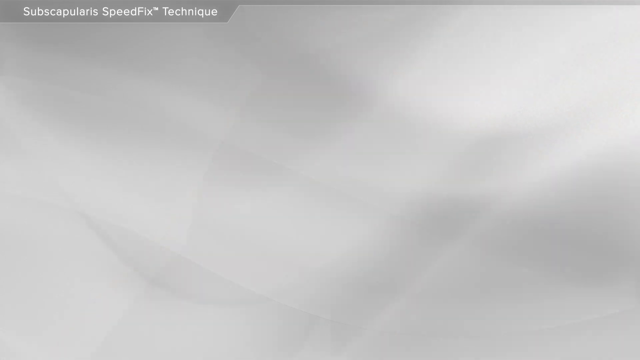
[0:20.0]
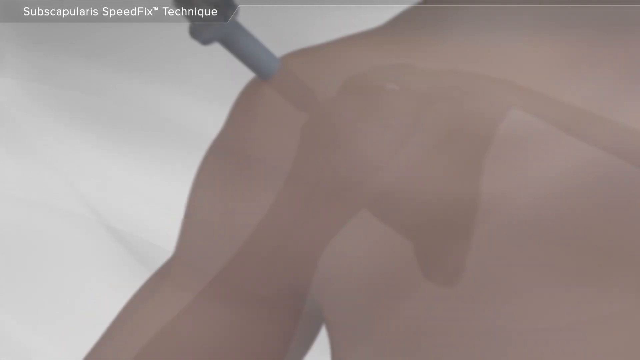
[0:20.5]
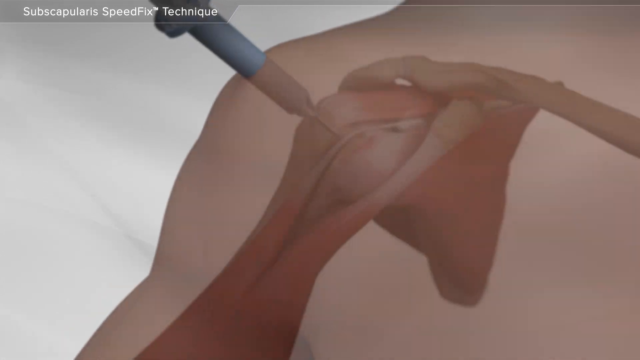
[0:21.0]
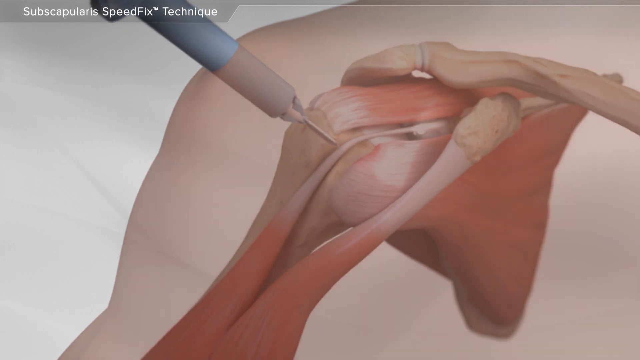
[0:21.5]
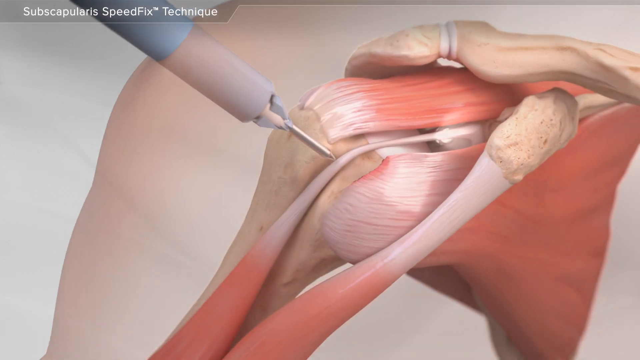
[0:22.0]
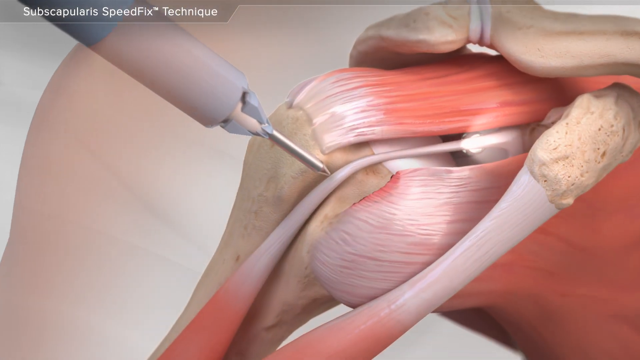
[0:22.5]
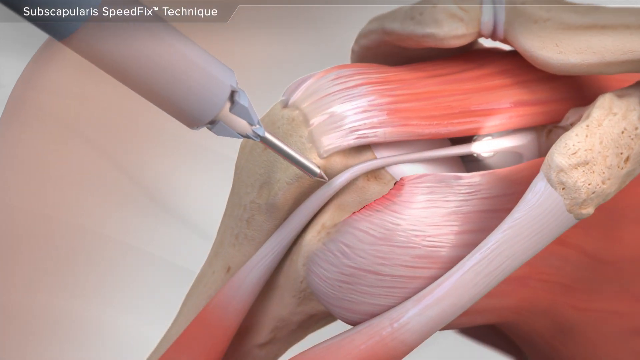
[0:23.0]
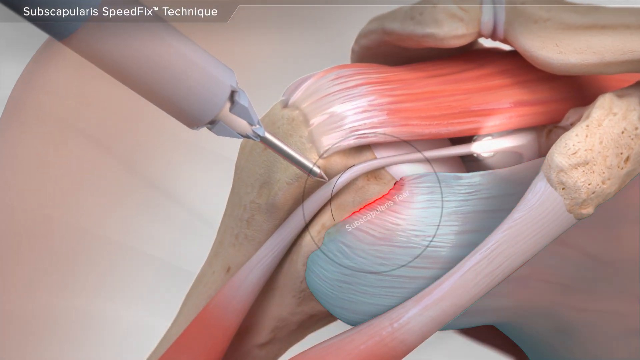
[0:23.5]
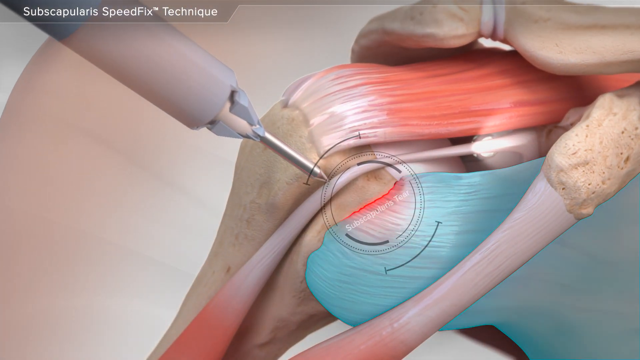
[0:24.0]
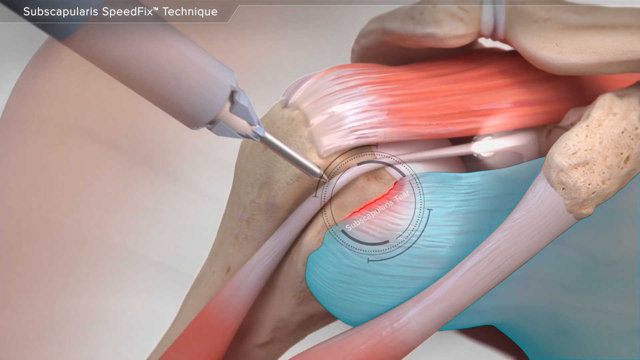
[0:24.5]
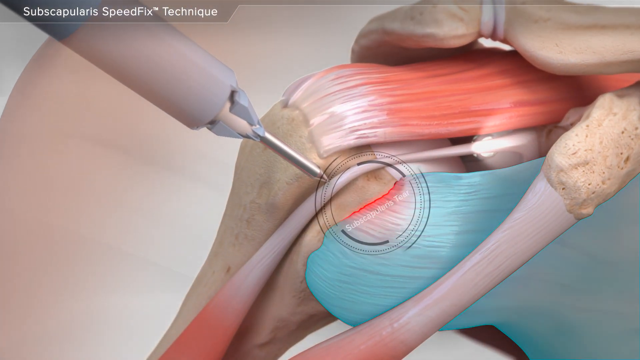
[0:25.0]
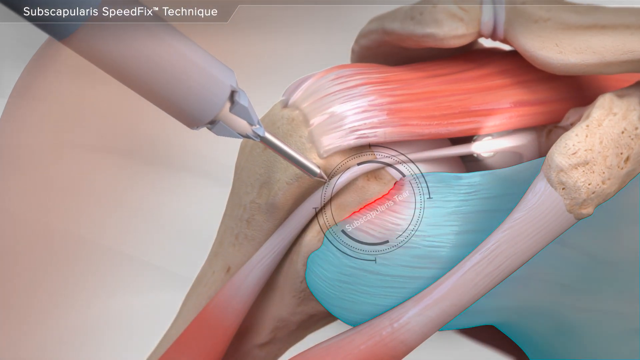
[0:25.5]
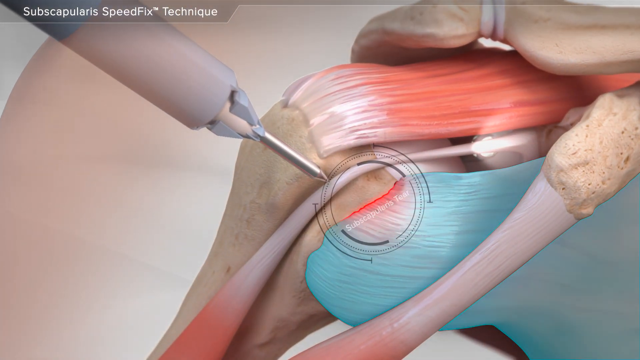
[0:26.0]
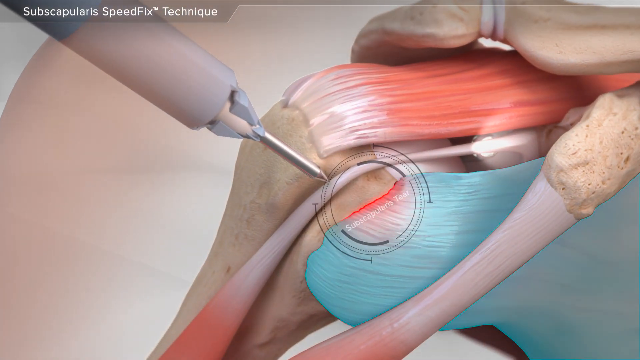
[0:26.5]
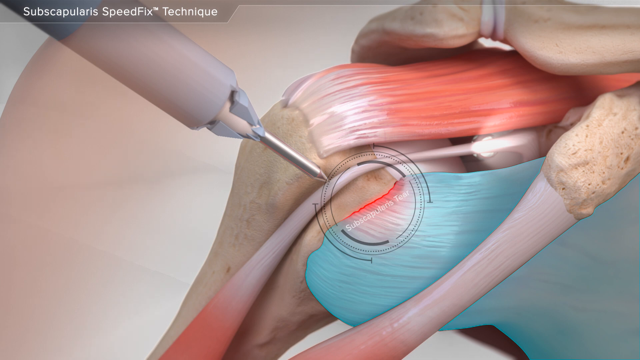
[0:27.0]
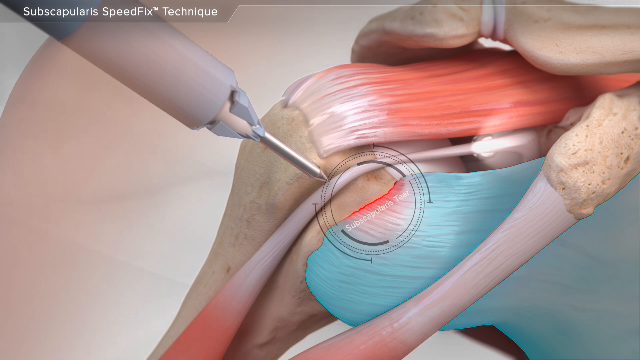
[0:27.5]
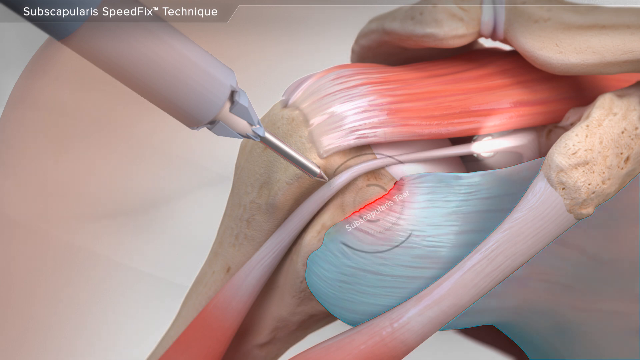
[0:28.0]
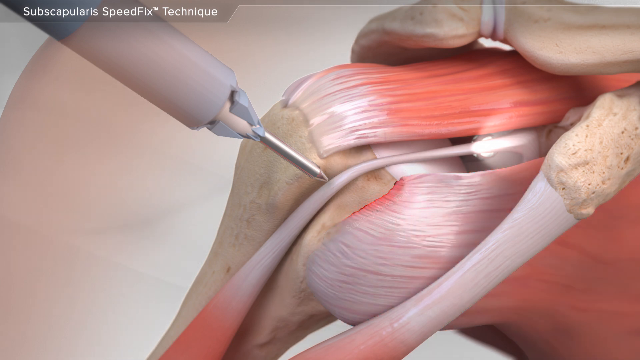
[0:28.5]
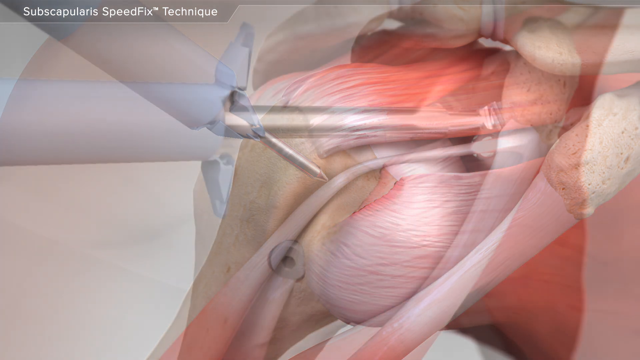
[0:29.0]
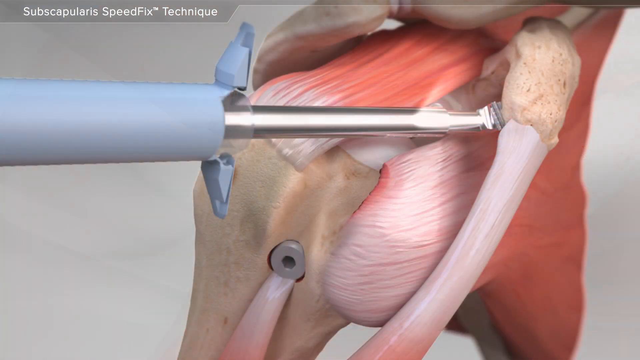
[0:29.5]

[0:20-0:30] A gray background appears with no text and no images. It transitions to a very up-close view of a shoulder, where the interior bones and muscles can be seen somewhat translucently through the skin. What looks like a needle or surgical device goes through the skin into the muscle itself. In the upper left corner, a white label reads "subscapularis speed fix technique". An even closer view of the surgical technique follows, with a circle seemingly targeting a red area labeled "subscapularis tear". Another viewpoint, a different angle of the image, is then shown very quickly.